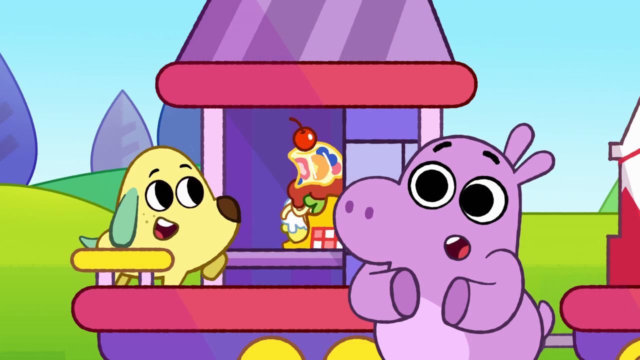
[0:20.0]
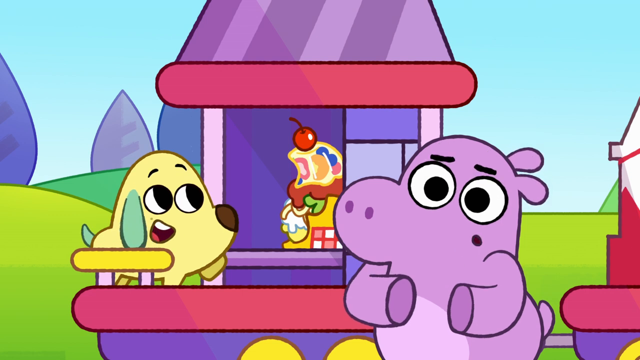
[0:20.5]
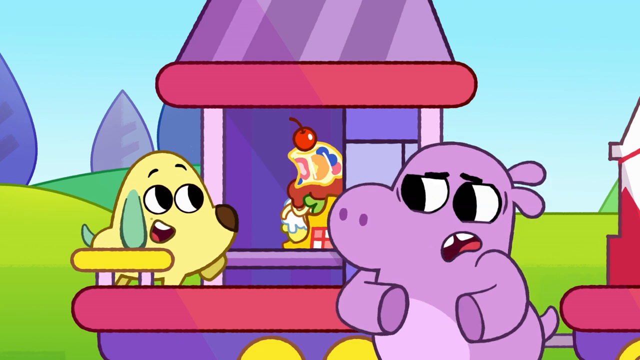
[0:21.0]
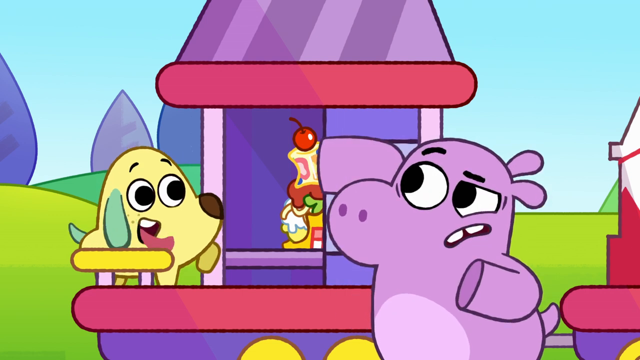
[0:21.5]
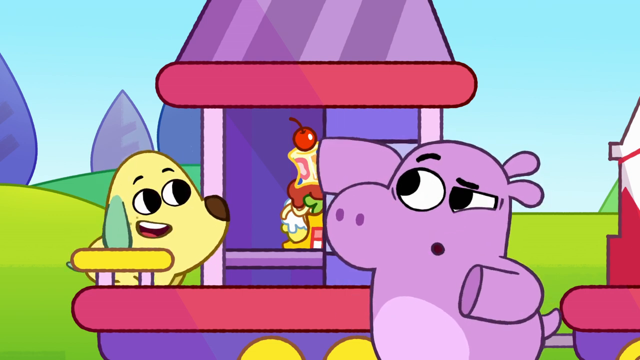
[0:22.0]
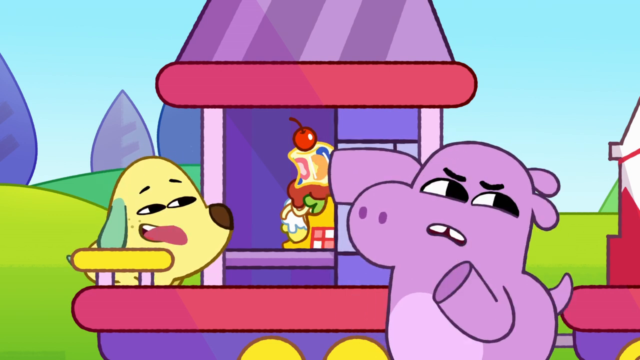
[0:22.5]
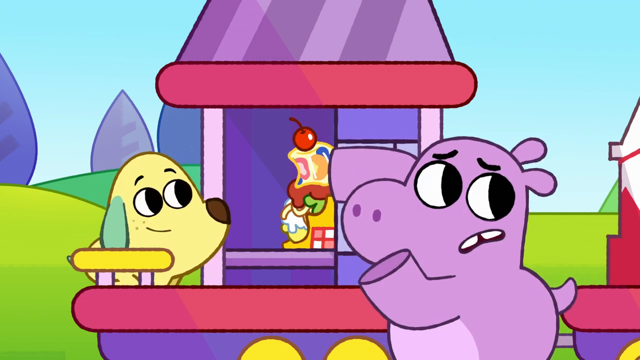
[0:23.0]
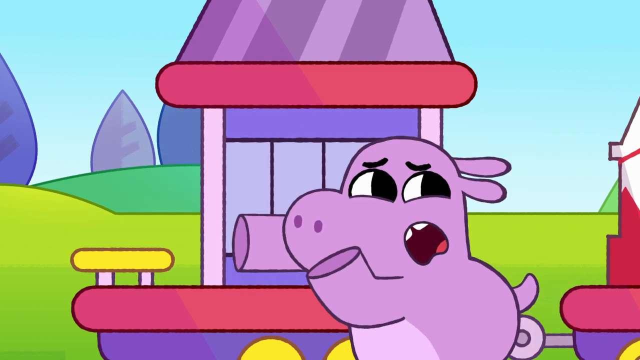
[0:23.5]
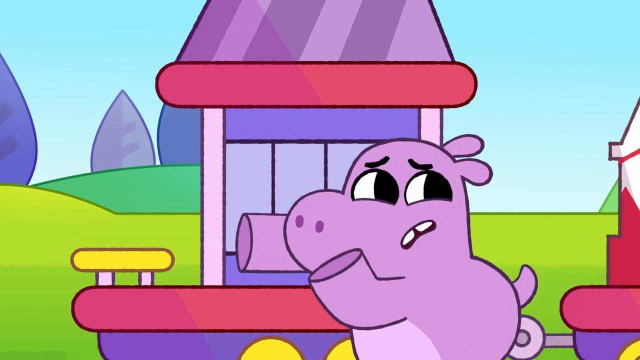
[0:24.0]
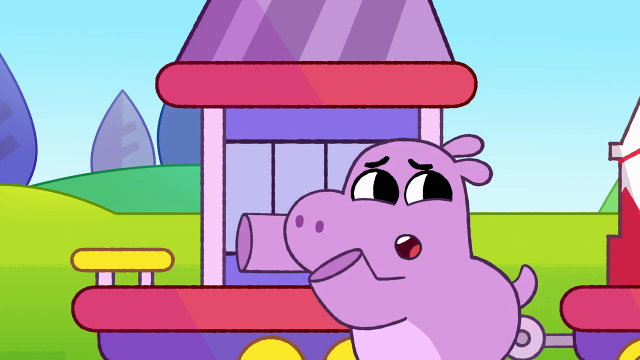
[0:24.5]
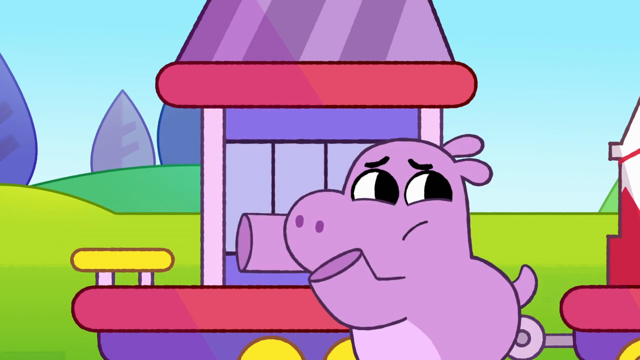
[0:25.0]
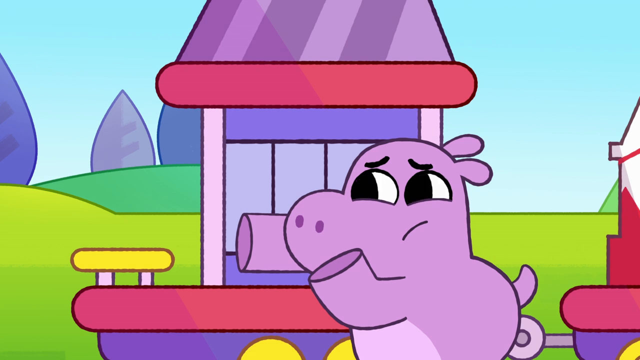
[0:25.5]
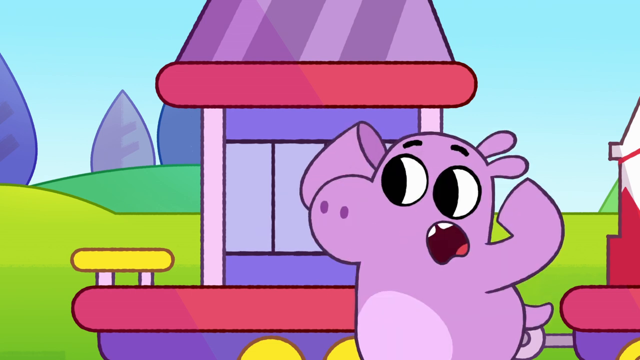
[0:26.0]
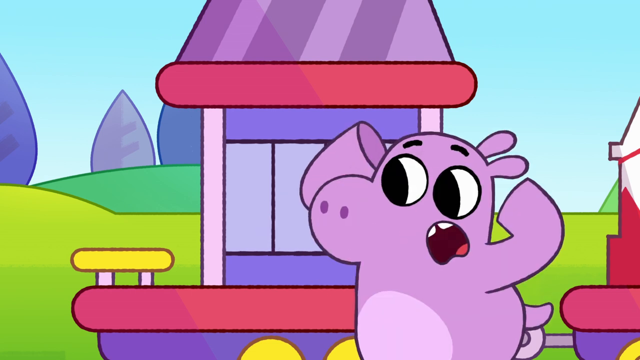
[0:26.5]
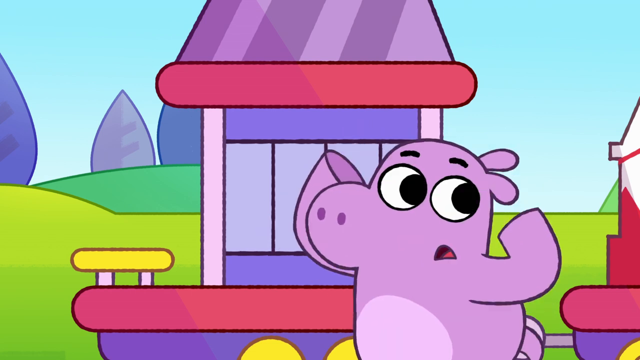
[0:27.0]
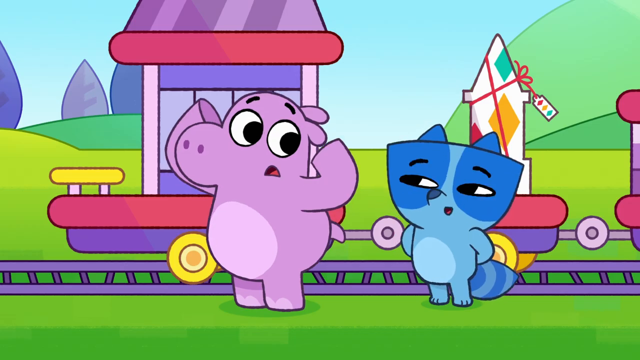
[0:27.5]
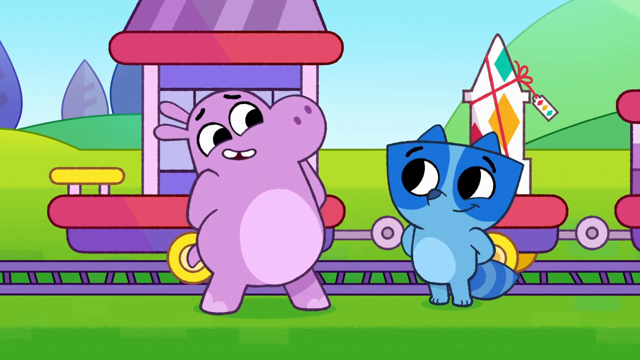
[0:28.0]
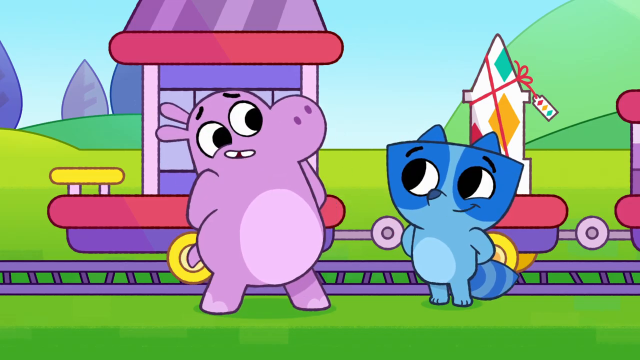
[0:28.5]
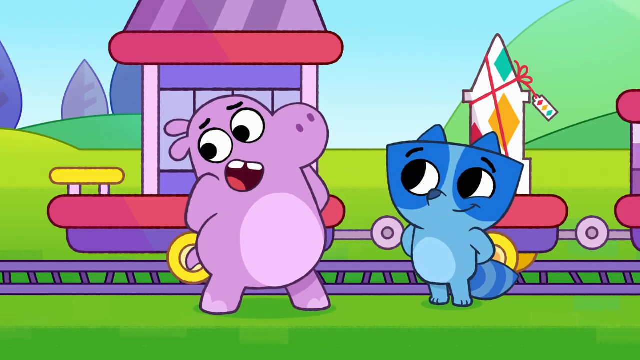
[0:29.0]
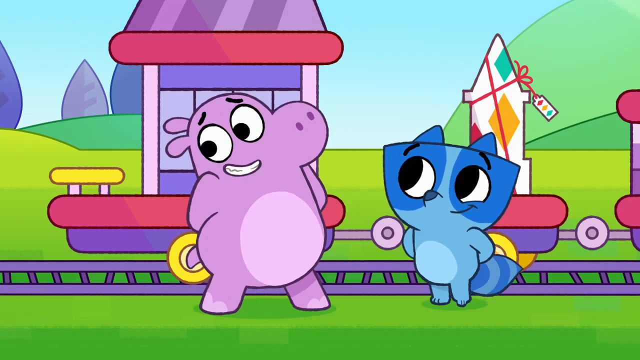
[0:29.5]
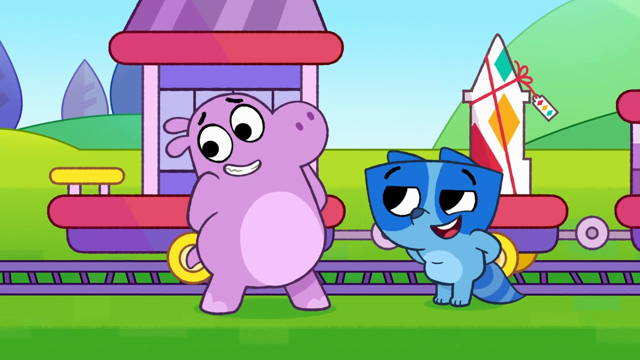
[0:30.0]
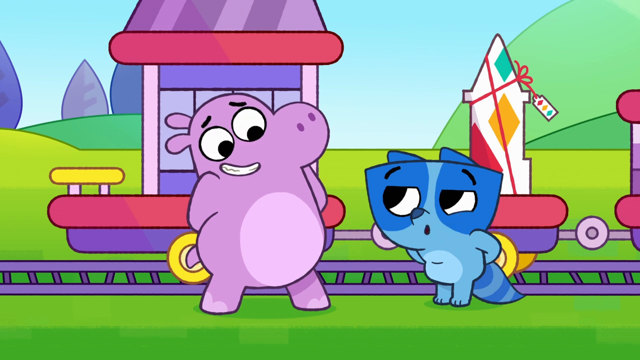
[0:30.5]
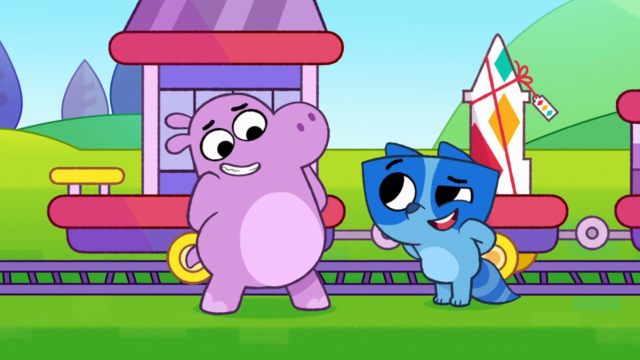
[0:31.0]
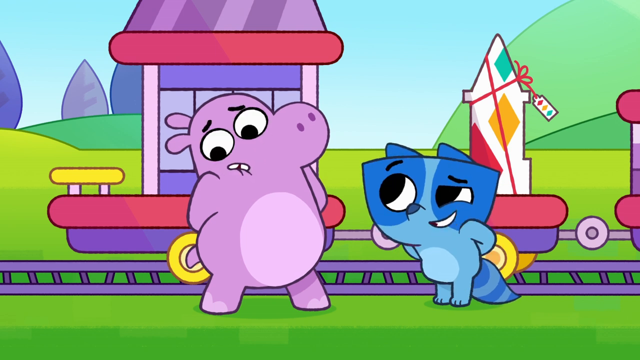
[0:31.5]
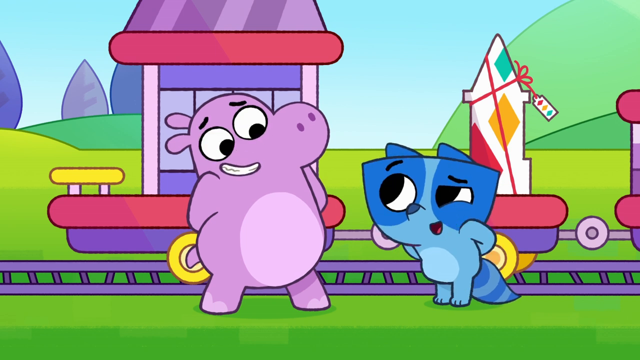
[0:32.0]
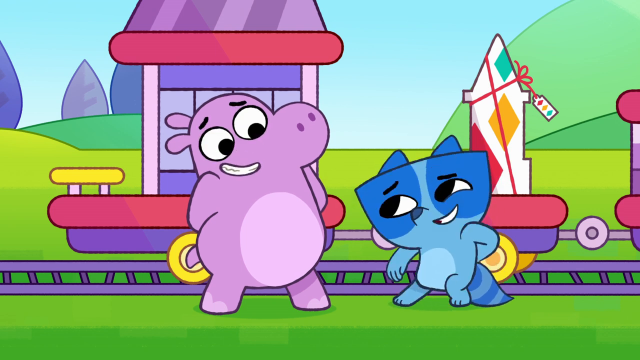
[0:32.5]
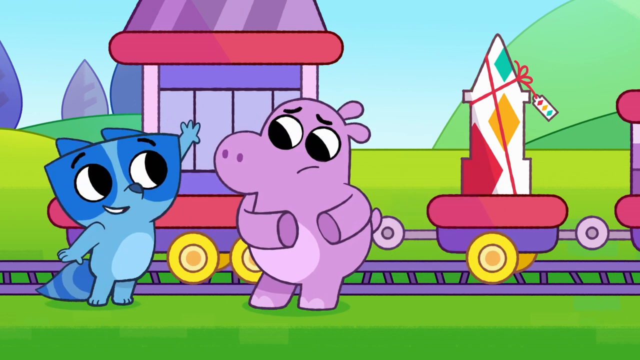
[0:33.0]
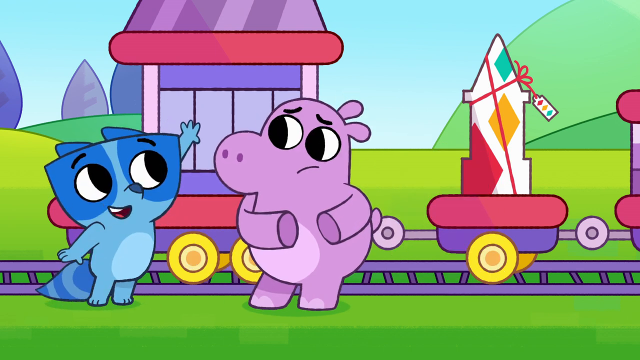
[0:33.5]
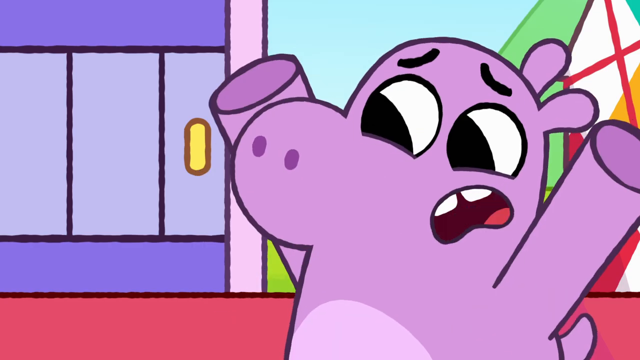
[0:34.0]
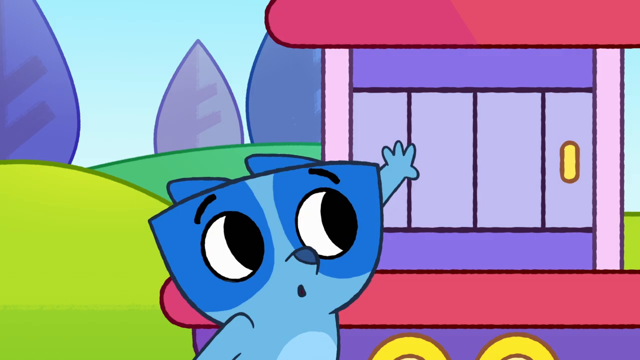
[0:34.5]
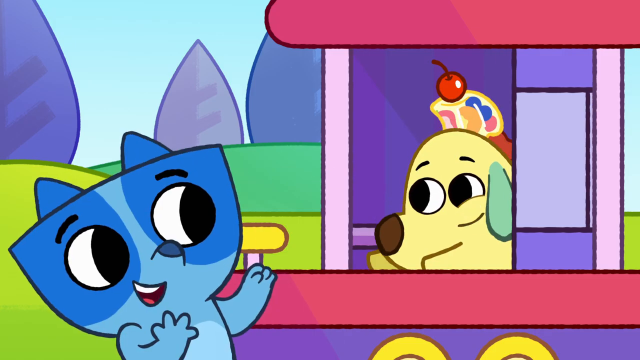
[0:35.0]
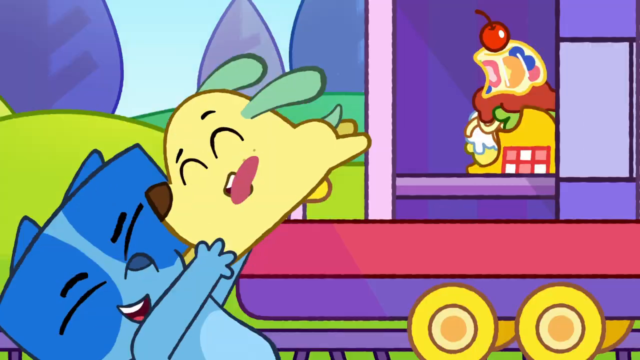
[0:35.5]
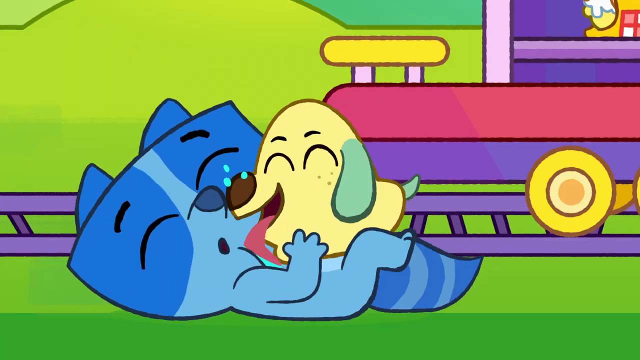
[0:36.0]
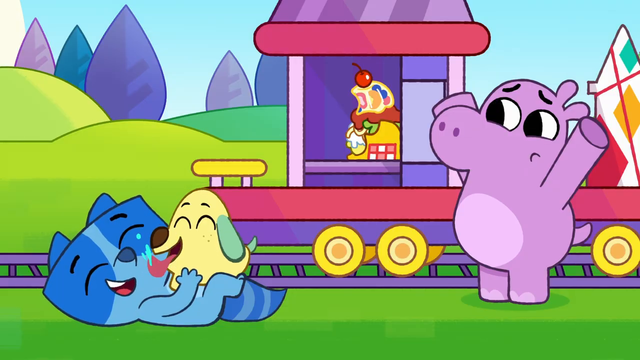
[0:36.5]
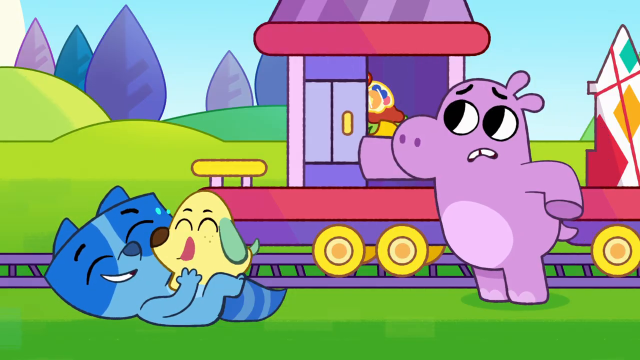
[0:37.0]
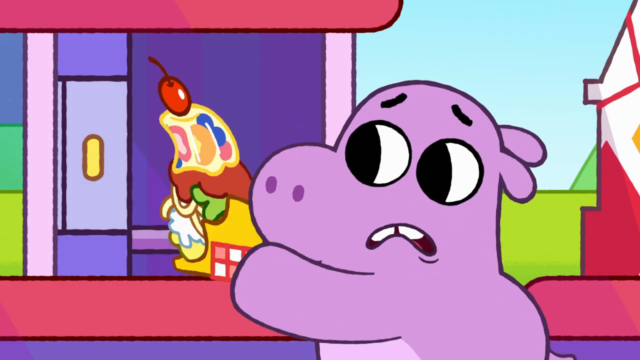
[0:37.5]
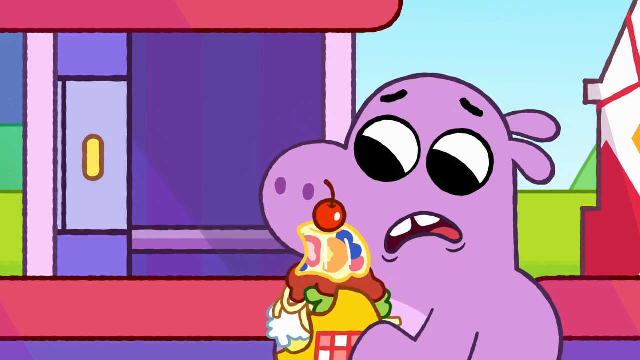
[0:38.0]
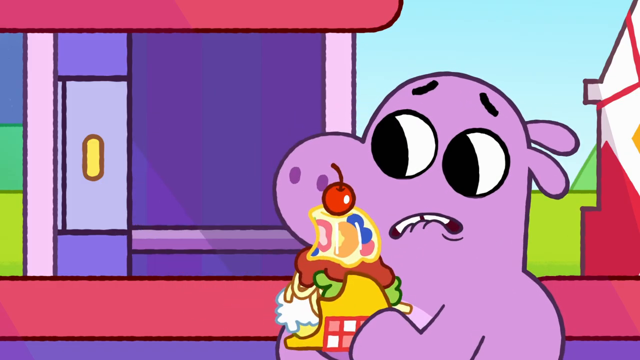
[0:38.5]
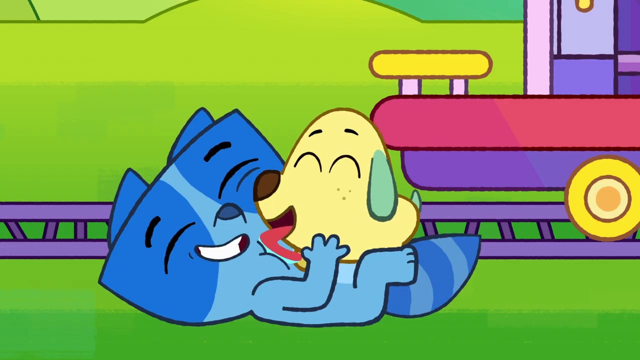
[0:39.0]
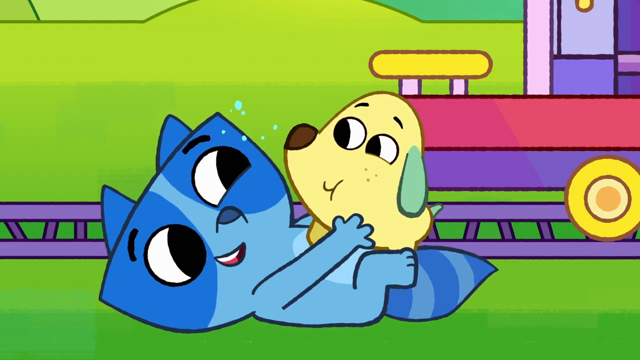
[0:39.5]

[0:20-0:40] The dog opens the door and shows a cake with a cherry on top, a strange cake with lots of colors: yellow, brown, green, pink, white, blue and orange, all in one cake. The dog is still happy, but the hippopotamus is not; it still seems worried about what is happening. They talk to each other. The hippopotamus tries to close the door, but the dog goes inside. They talk to each other, trying to figure out what to do. The dog is so happy that it is eating the other animal, the blue one. The dog does not eat the cake; the hippopotamus grabs the cake, which is still in one piece. They are not happy.